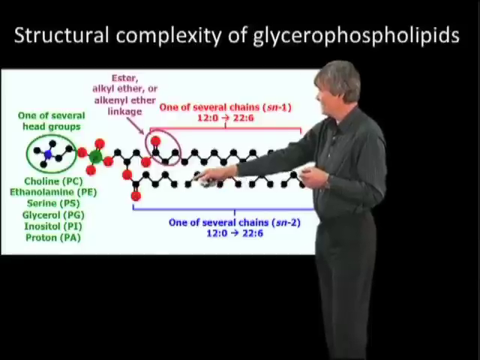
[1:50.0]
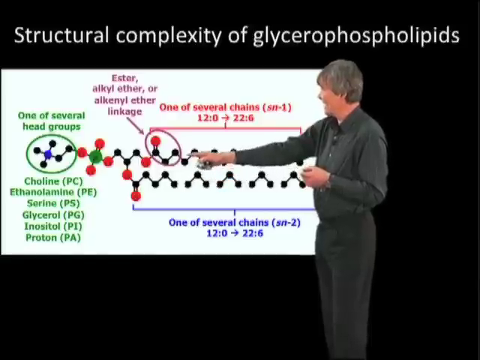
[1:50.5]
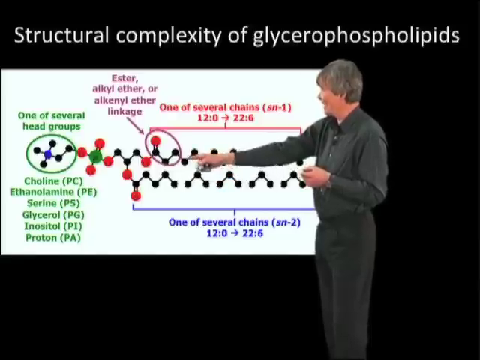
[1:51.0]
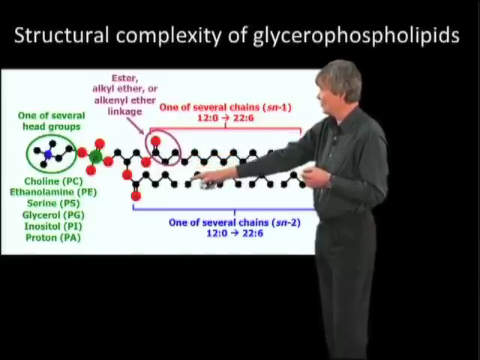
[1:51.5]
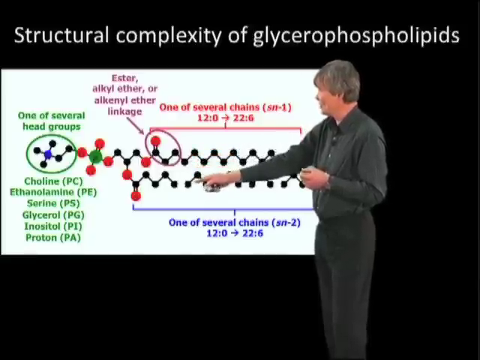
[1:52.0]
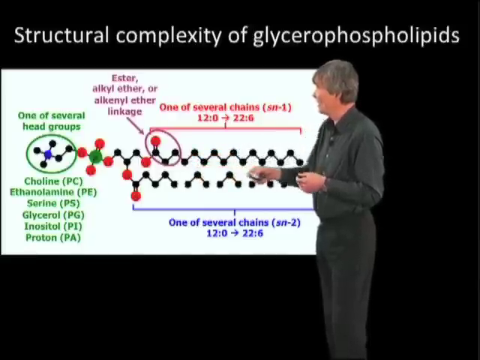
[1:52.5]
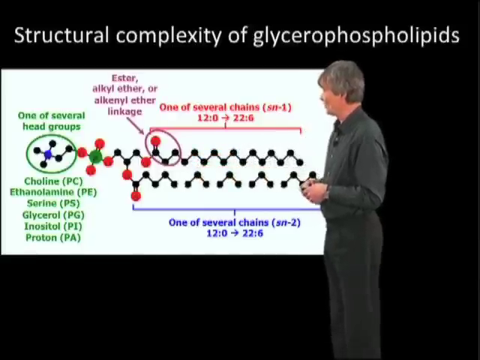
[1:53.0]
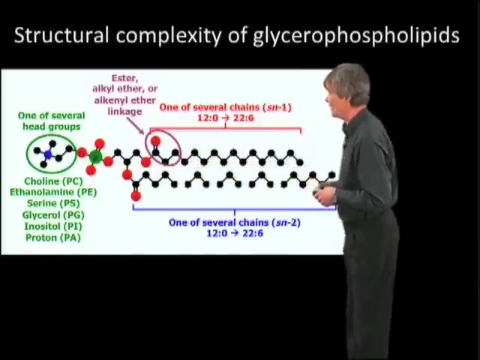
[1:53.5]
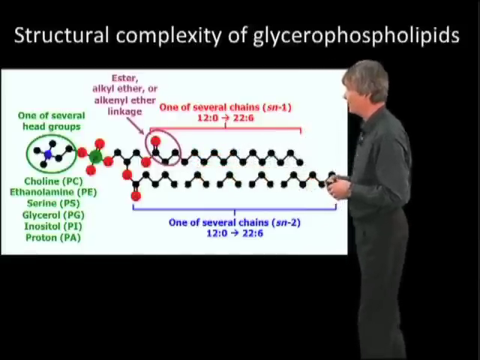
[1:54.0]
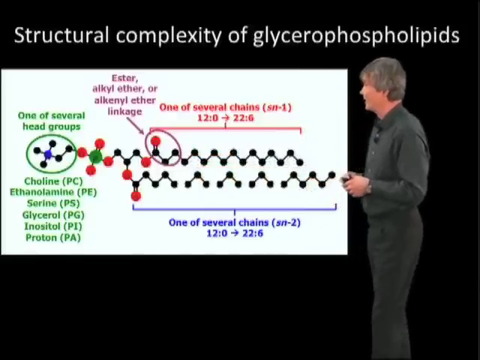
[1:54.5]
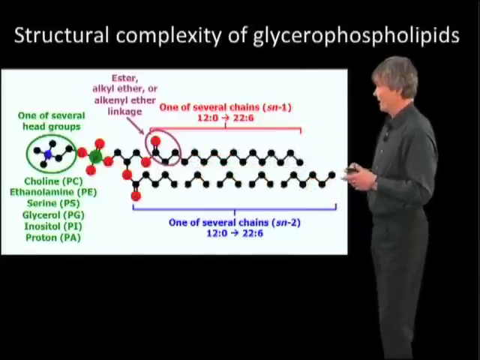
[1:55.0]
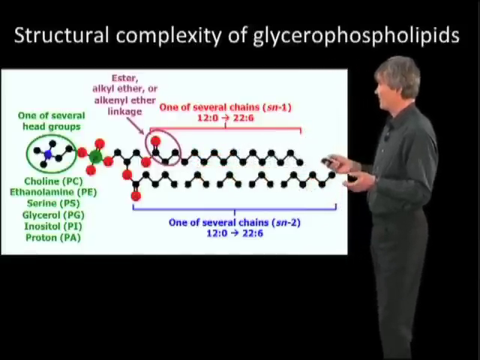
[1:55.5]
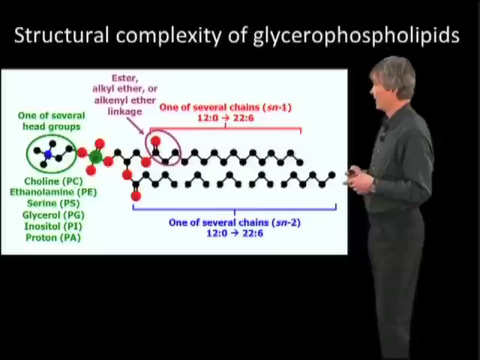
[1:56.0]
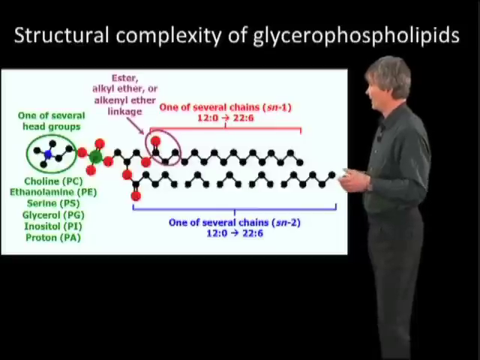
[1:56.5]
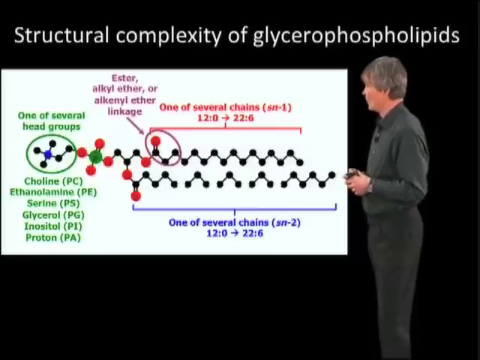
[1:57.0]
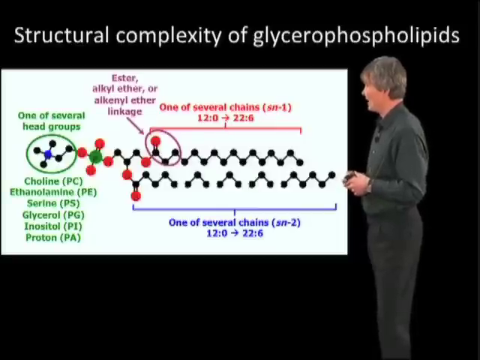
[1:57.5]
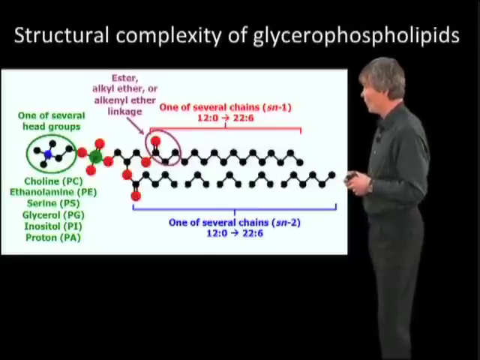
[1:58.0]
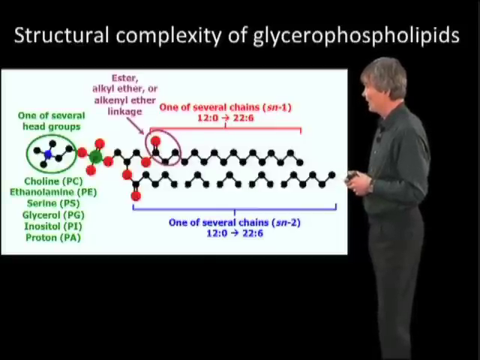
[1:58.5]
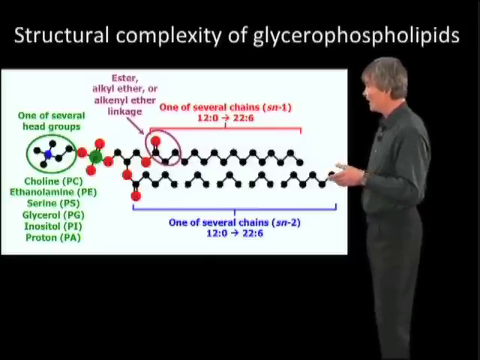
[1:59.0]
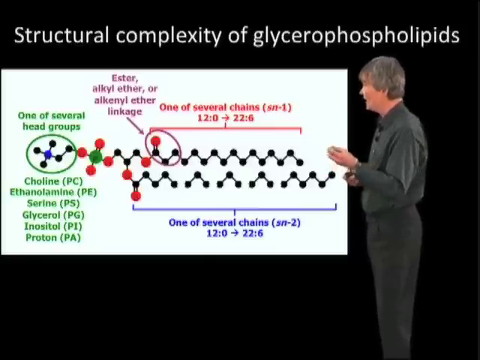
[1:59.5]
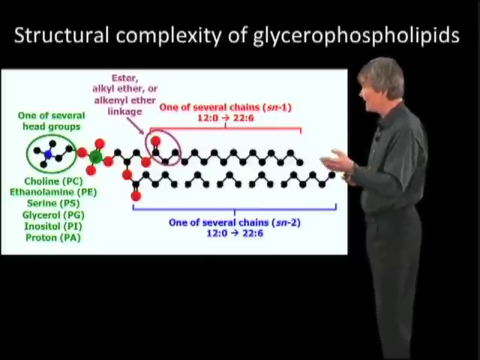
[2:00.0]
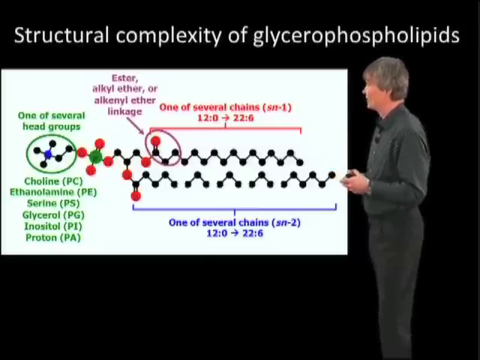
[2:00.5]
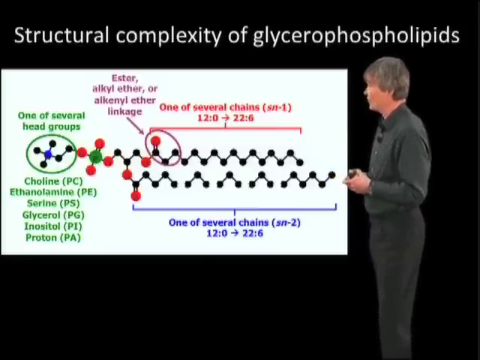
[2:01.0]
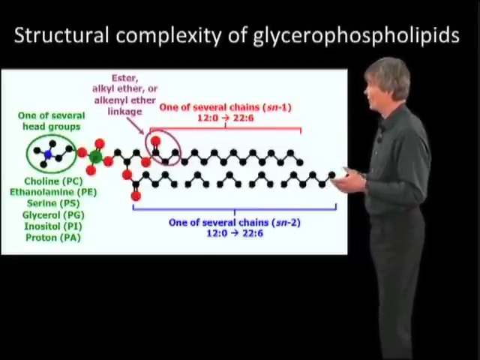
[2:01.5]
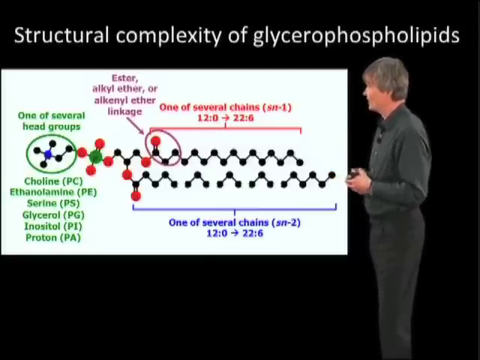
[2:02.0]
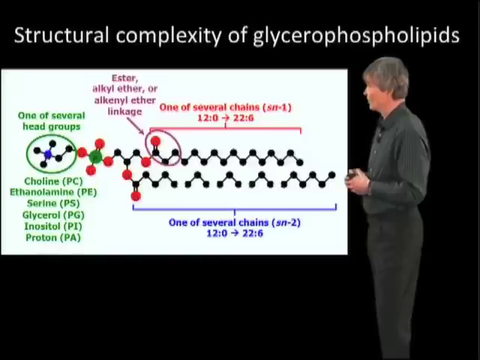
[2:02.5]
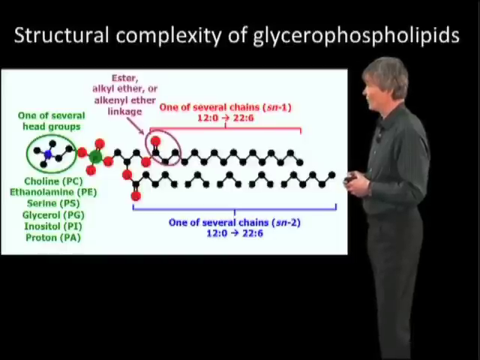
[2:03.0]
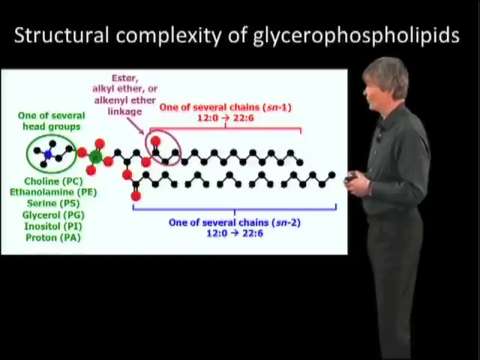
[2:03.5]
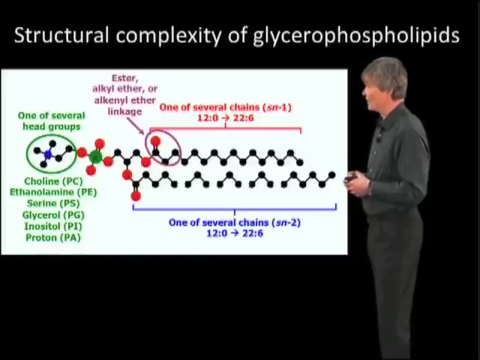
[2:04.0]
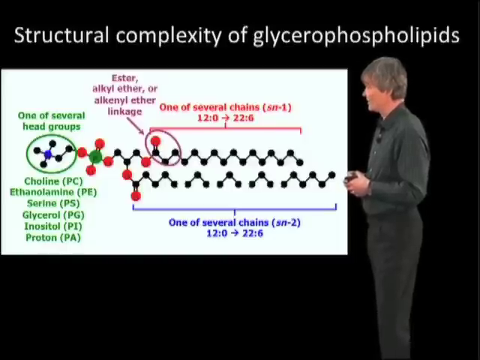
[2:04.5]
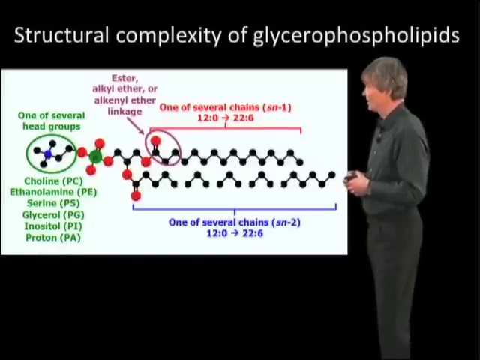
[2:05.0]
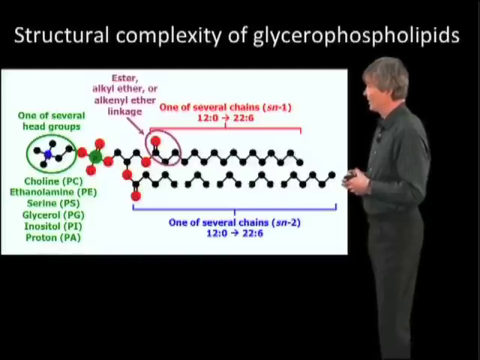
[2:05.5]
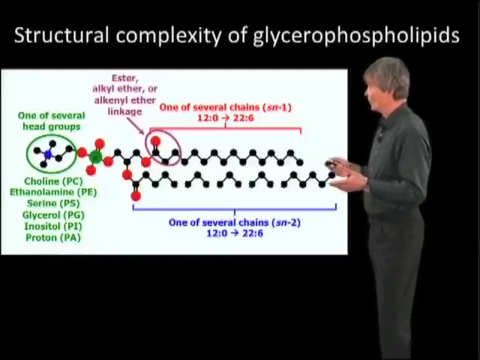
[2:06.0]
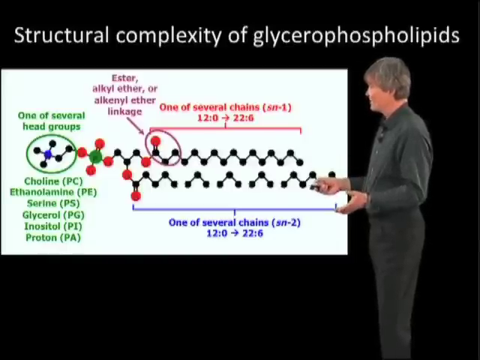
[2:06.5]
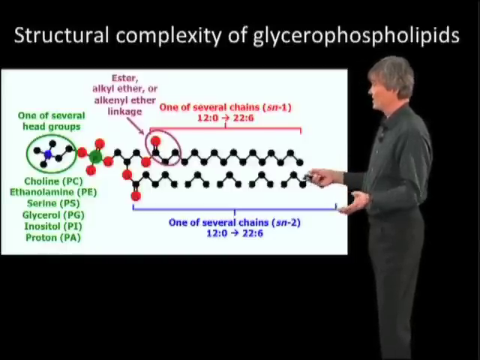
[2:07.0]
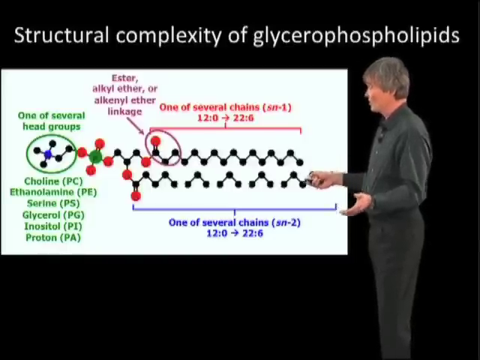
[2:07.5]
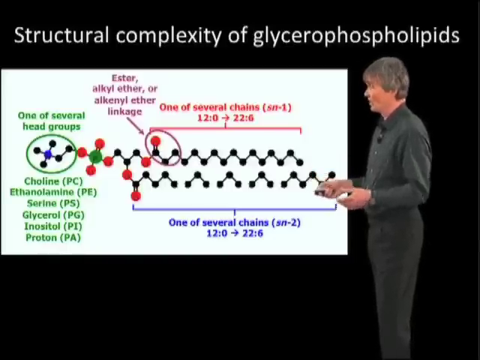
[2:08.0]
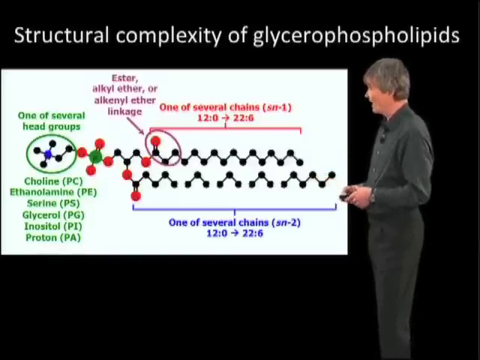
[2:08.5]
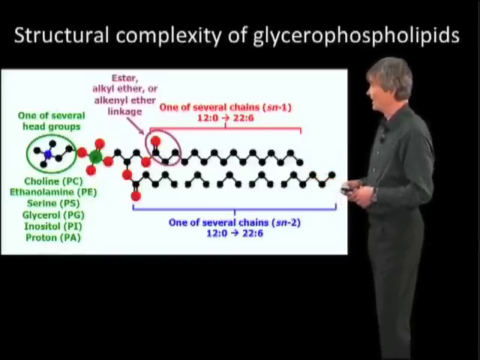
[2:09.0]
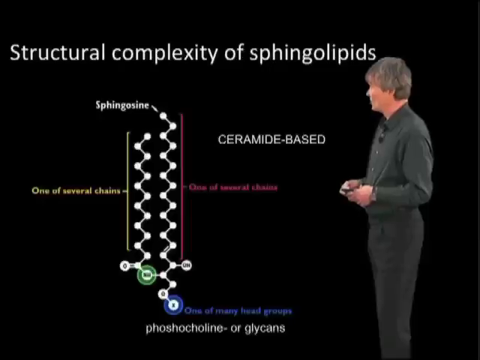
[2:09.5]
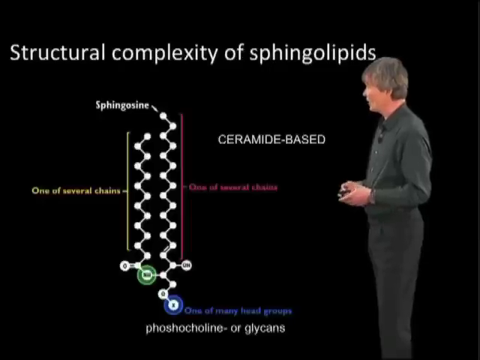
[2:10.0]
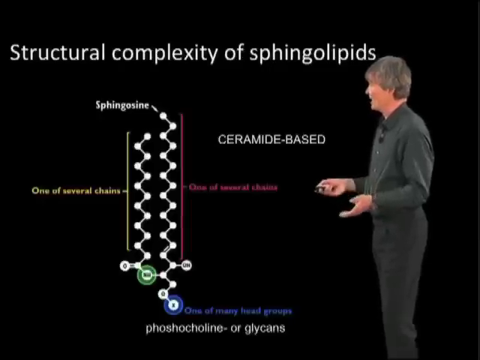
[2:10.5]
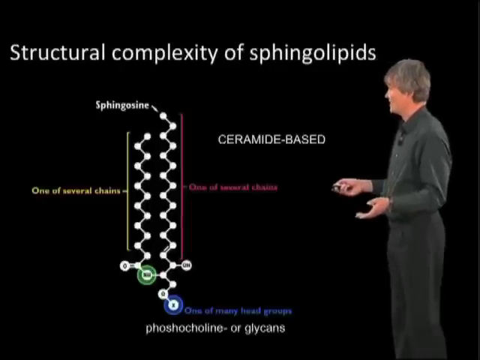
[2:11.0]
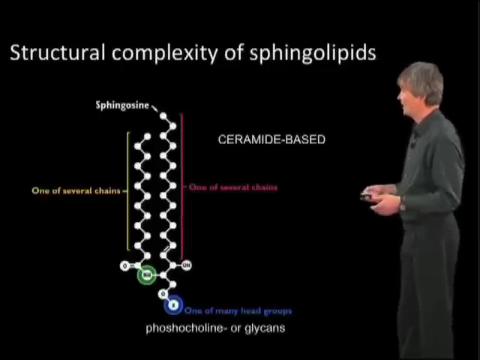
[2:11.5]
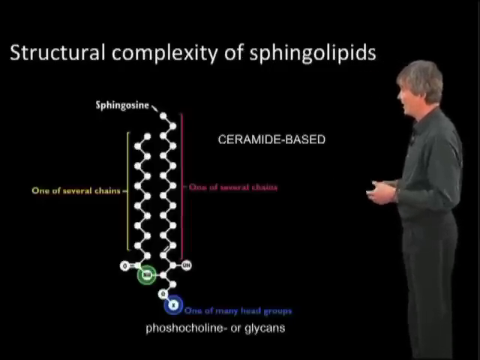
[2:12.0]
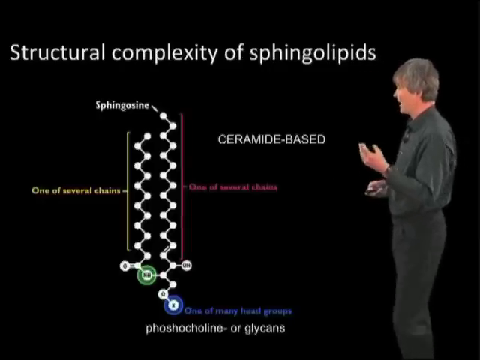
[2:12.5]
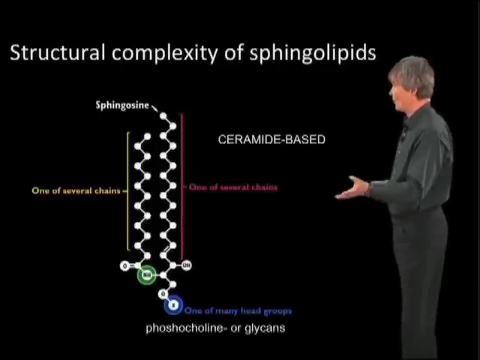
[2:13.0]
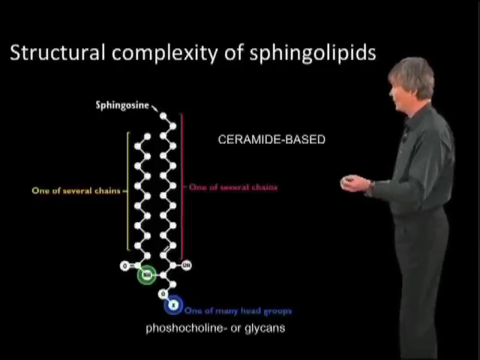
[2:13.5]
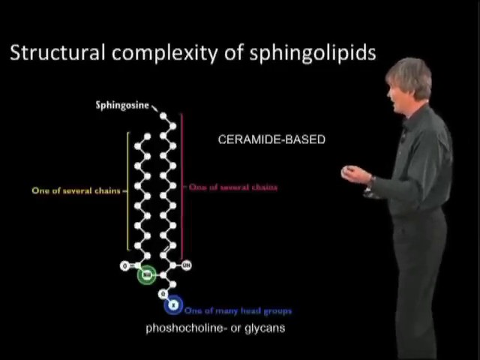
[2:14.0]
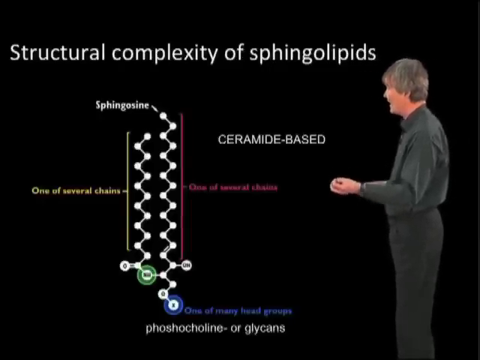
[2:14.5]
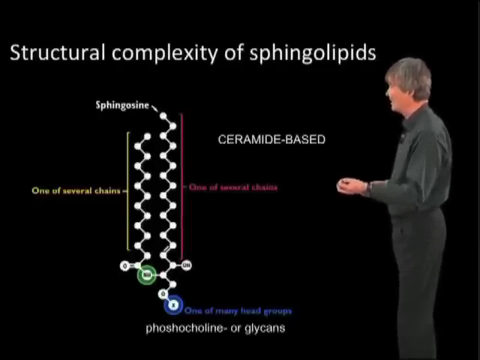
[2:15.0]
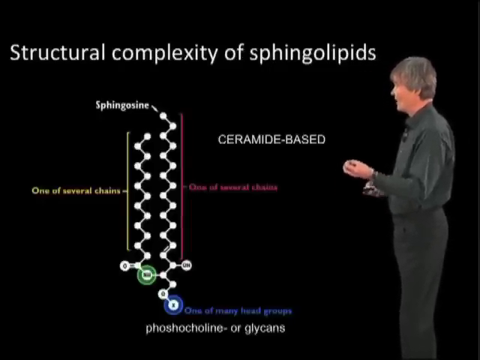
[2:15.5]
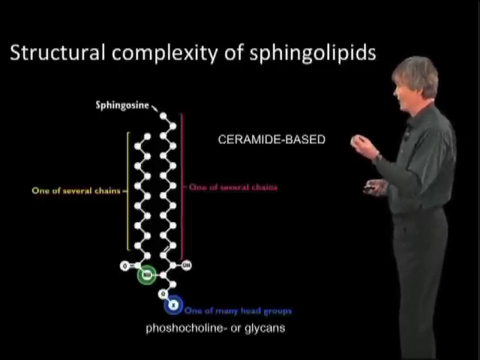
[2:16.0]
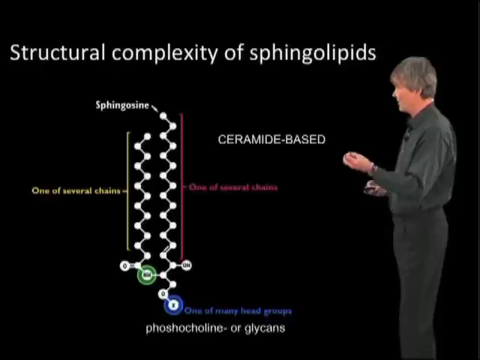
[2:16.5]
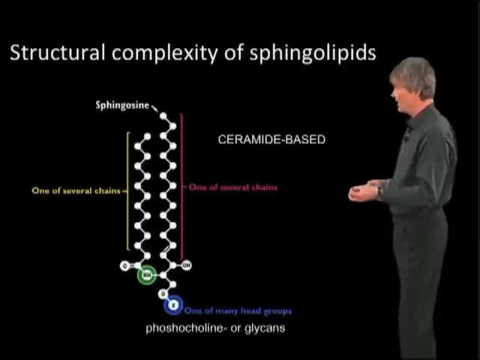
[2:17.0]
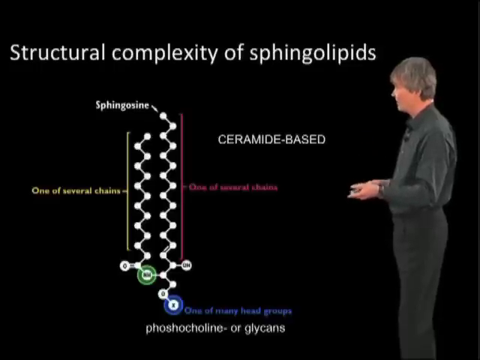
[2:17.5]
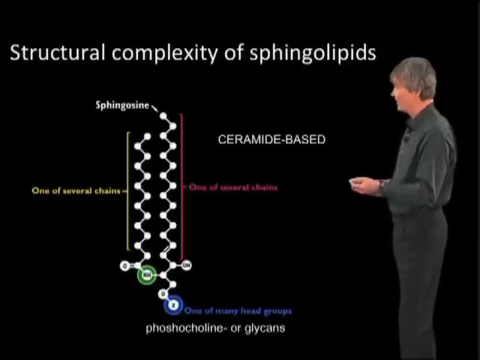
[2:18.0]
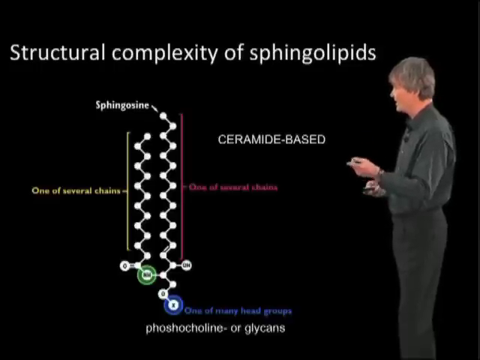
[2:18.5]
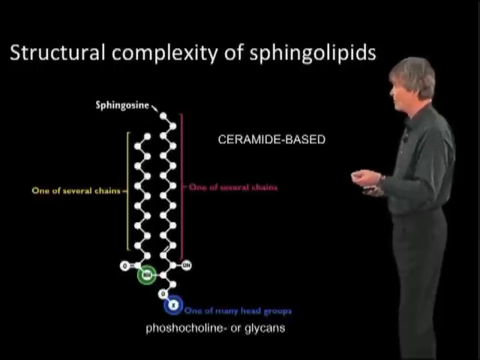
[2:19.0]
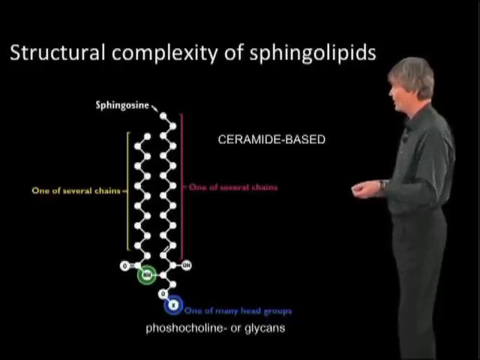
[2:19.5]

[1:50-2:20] Still on the structural complexity of glycerophospholipids, the instructor points at the top tail and the bottom tail, the clicker still in his right hand. He looks at the slide, not the camera, and moves his hands; at one point he opens his left hand in an open gesture, then holds the clicker with both hands again. He keeps looking at the slide, especially at areas circled in green and in purple. Later he makes an open gesture with his hands or arms and then puts them back together. The next slide is a close-up of the structural complexity of sphingolipids, also in 2D, showing two tails, each labeled "one of several chains," and a phospho choline or glycans head; it is ceramide based. He stays on this diagram.